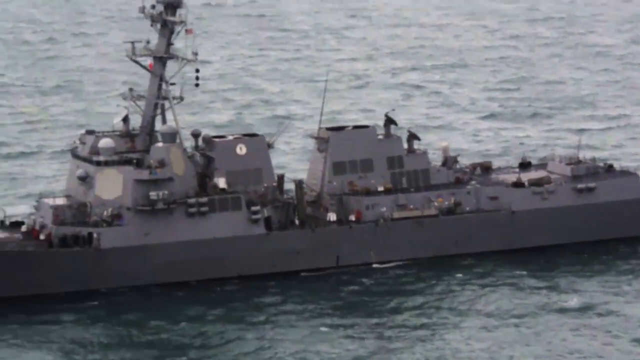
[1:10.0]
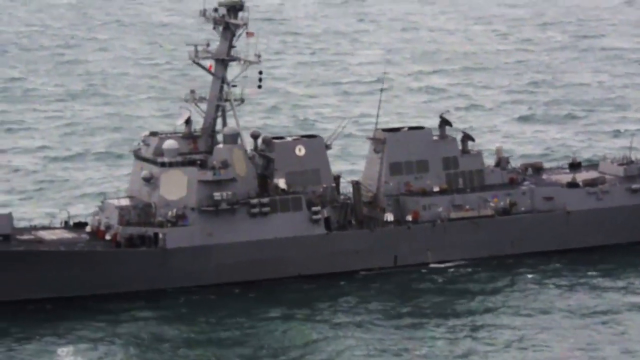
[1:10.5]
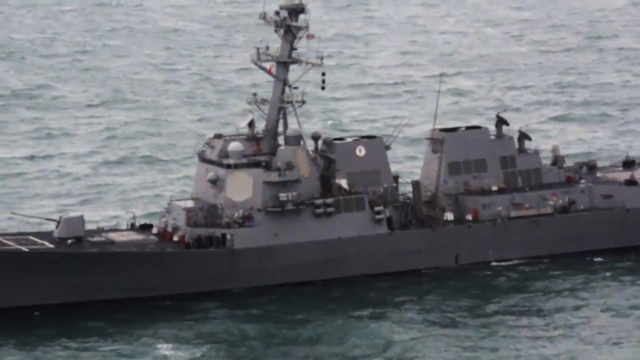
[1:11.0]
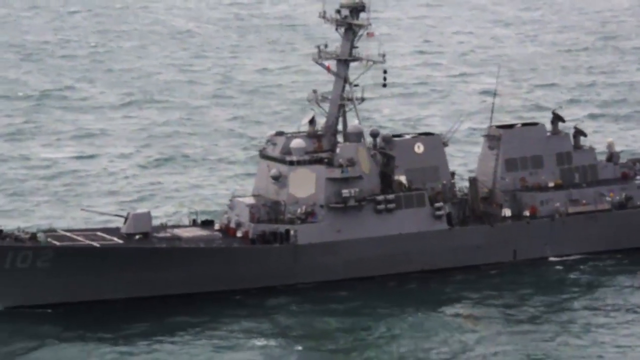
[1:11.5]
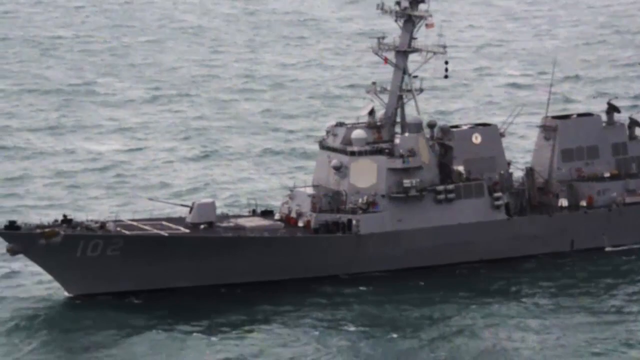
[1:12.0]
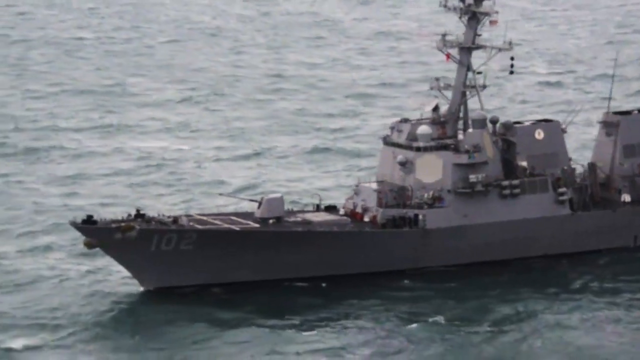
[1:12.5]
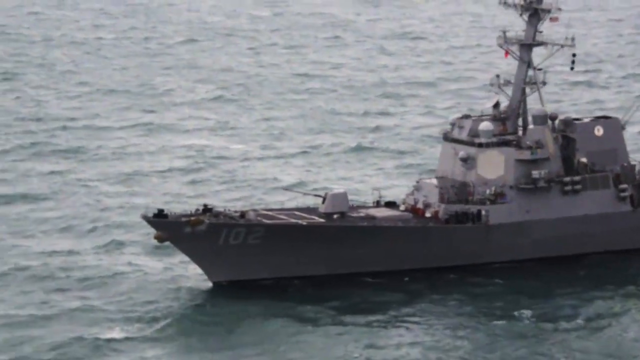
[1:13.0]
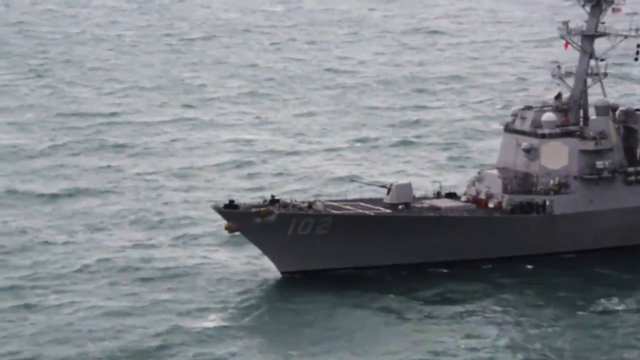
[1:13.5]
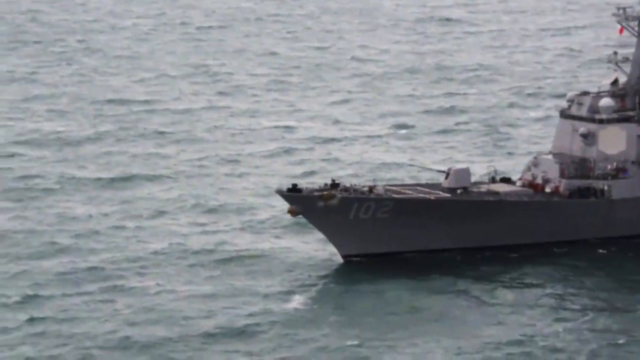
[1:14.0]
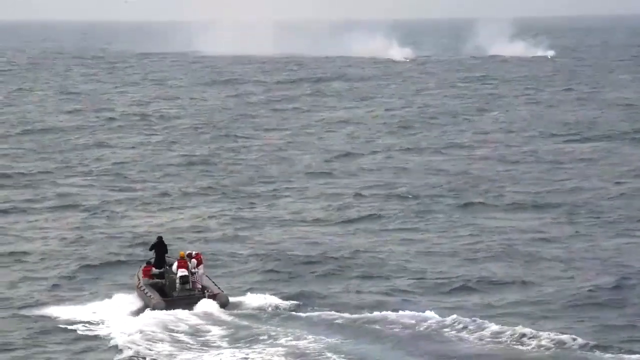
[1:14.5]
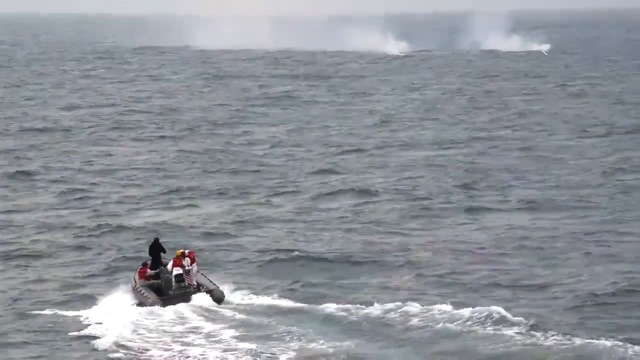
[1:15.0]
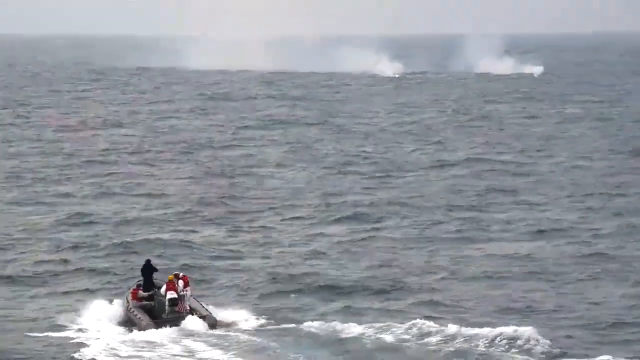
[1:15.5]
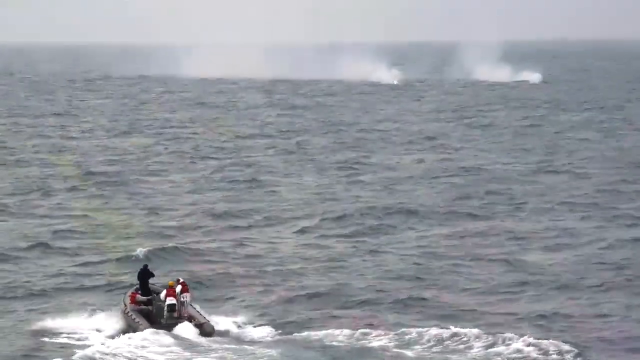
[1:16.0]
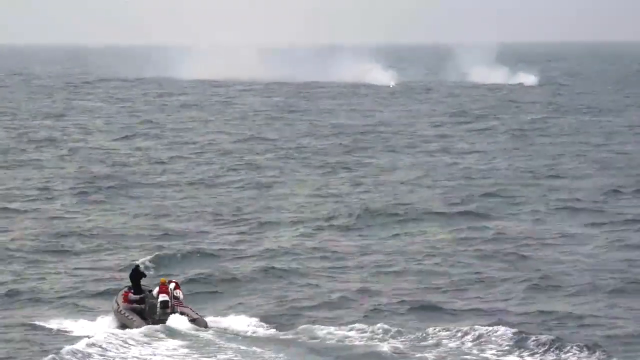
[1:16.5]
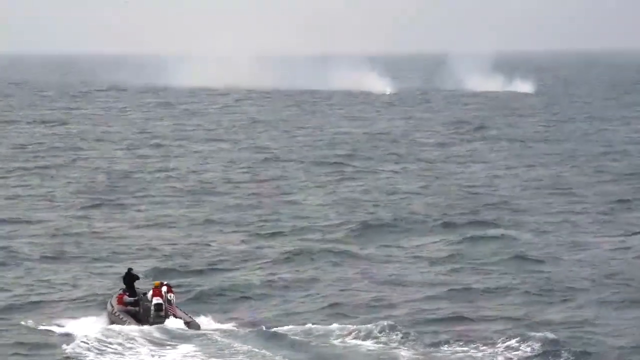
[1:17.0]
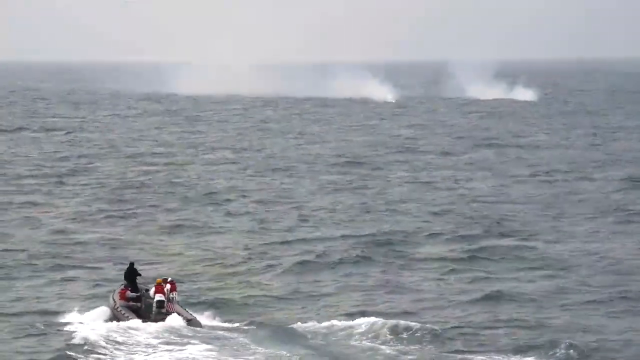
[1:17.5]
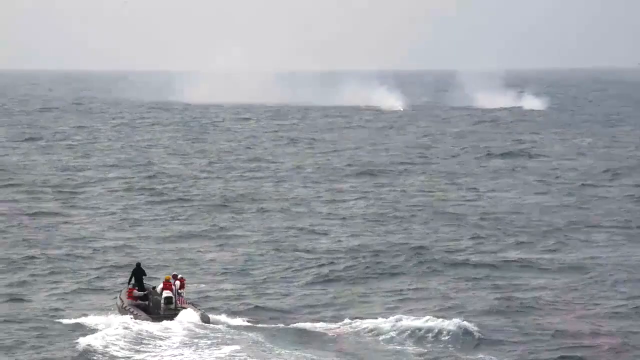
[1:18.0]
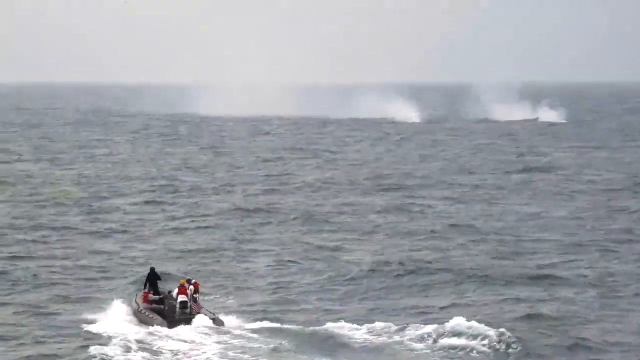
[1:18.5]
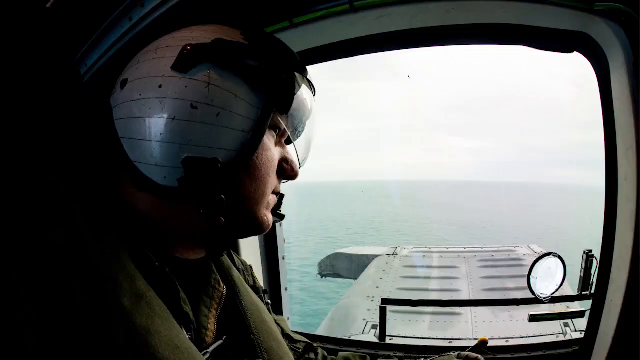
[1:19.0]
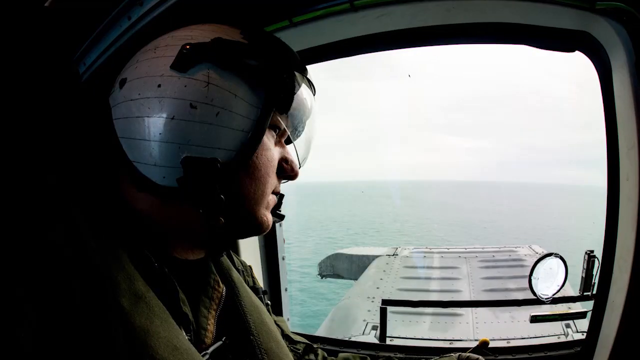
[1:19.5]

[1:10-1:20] The battleship, which is quite long and bears the number 102, sails through calm waters. The currents then appear to get a little stronger. A small speedboat with three crewmen wearing life jackets rushes to a part of the sea where something apparently fell or exploded, as white smoke or water vapor comes out of the surface, looking like smoke bombs or flares. Then one of the airmen looks out a window.